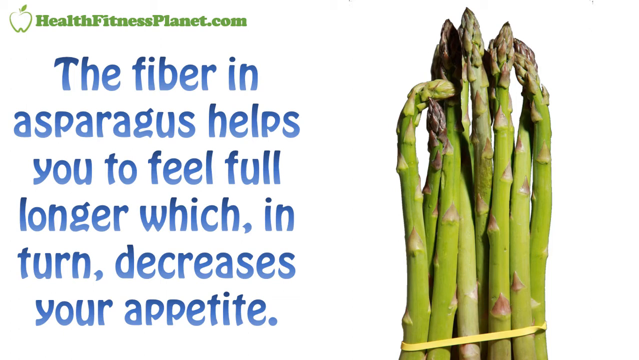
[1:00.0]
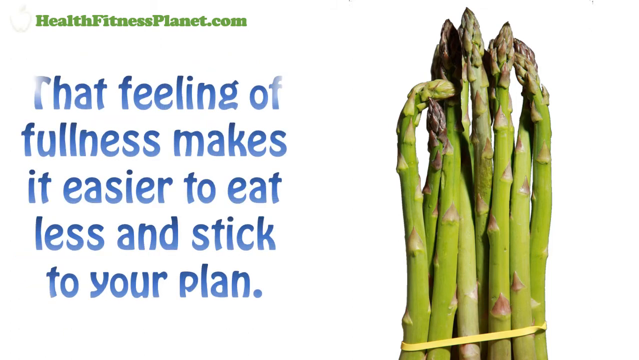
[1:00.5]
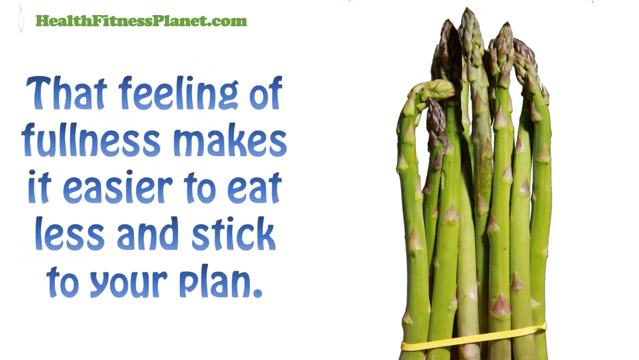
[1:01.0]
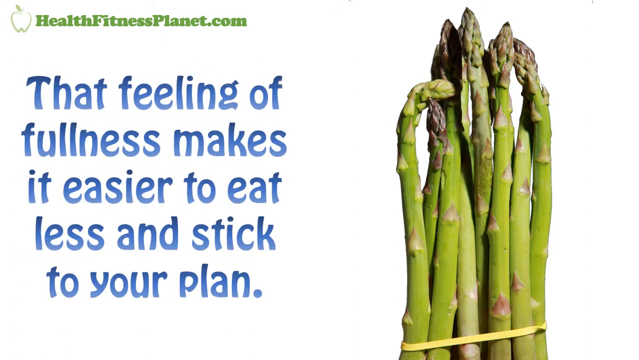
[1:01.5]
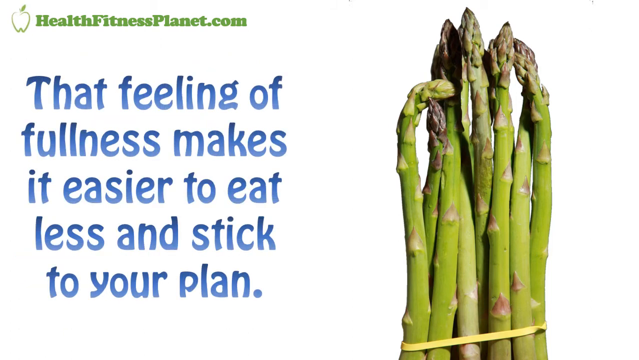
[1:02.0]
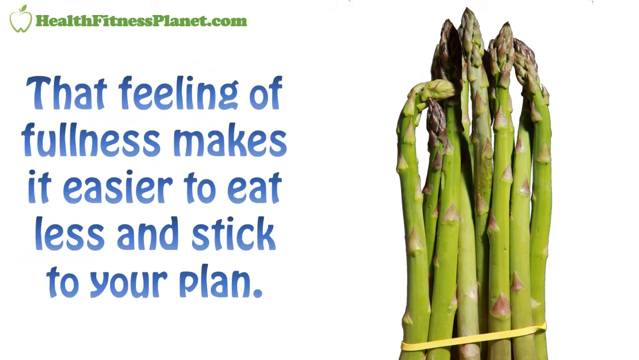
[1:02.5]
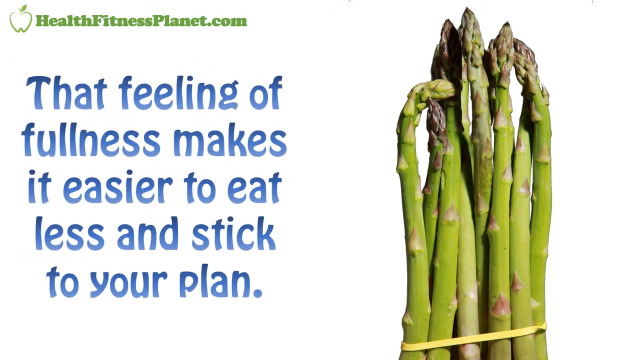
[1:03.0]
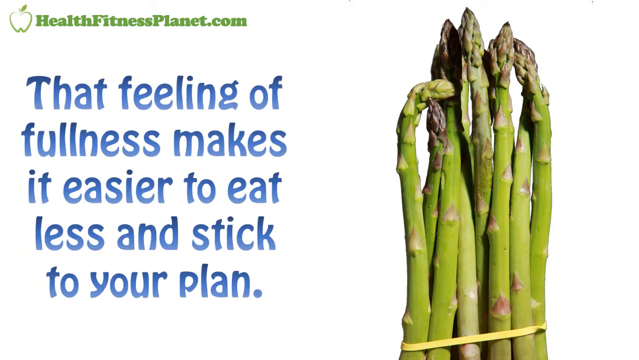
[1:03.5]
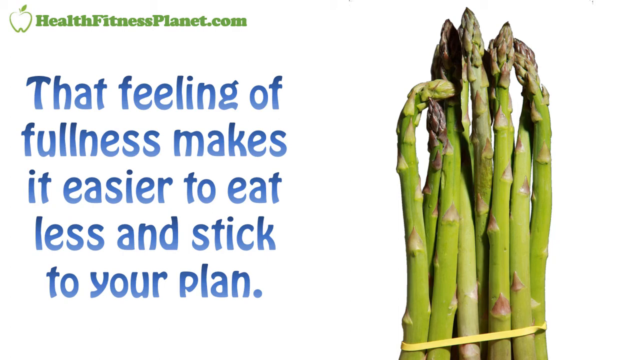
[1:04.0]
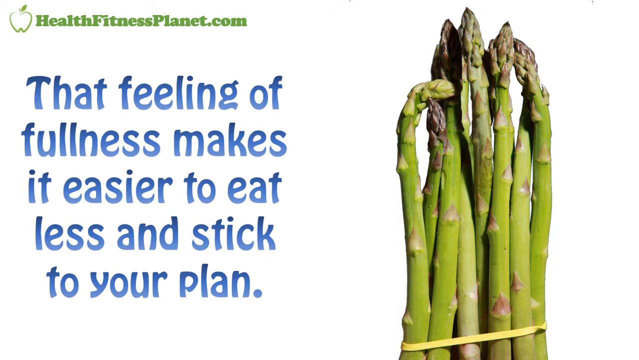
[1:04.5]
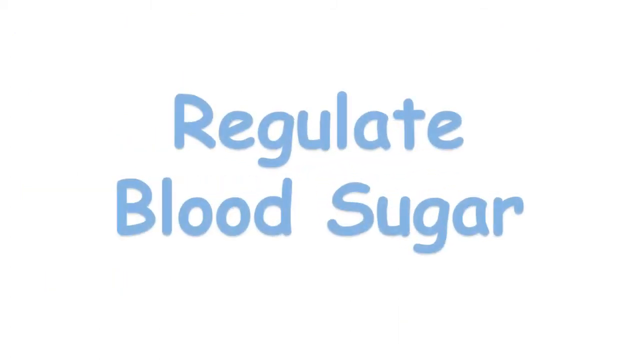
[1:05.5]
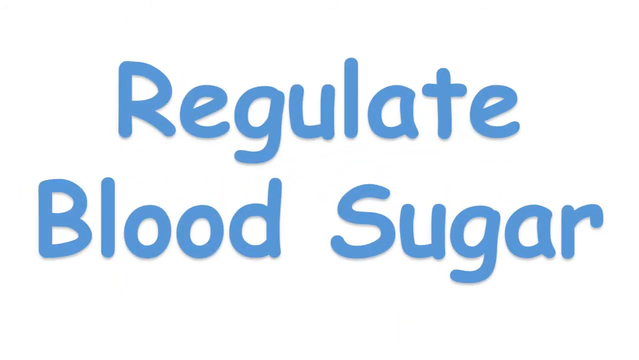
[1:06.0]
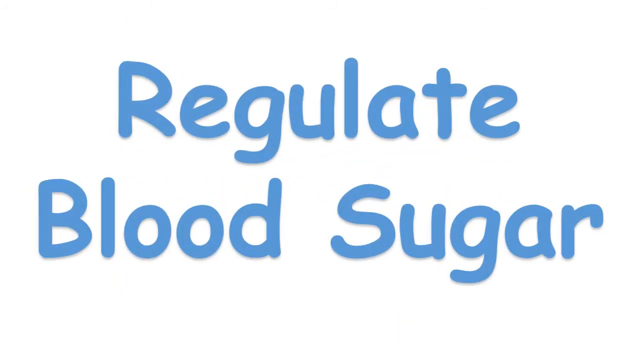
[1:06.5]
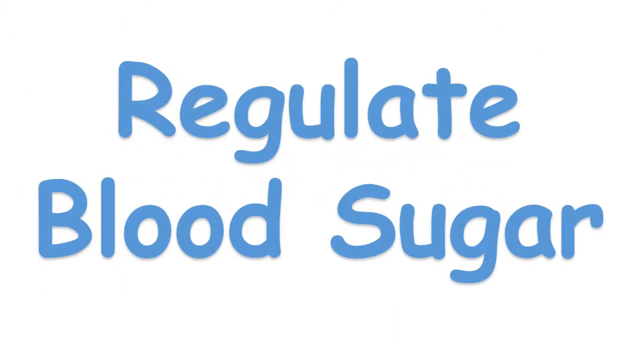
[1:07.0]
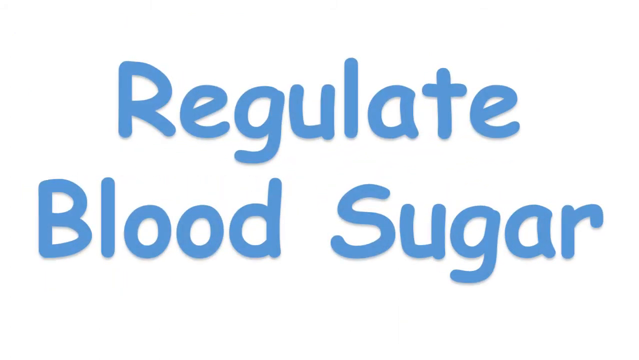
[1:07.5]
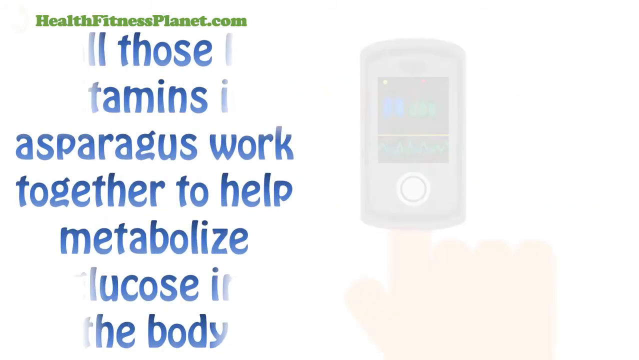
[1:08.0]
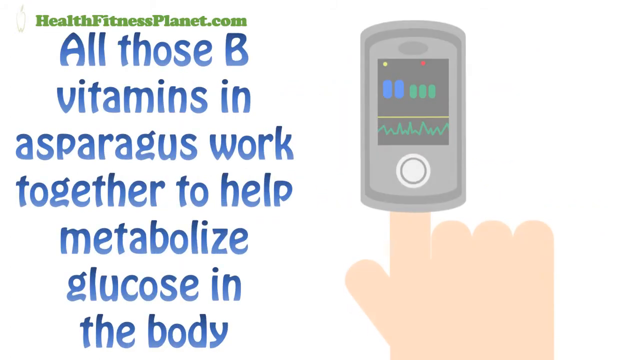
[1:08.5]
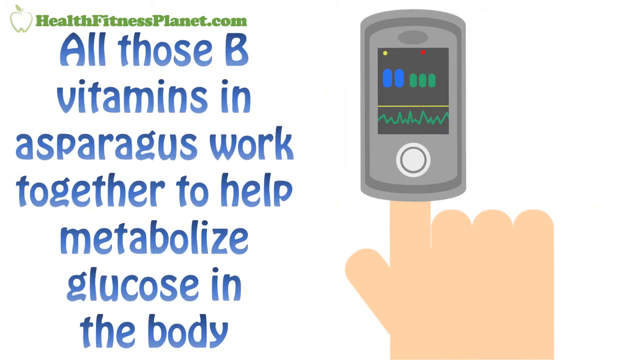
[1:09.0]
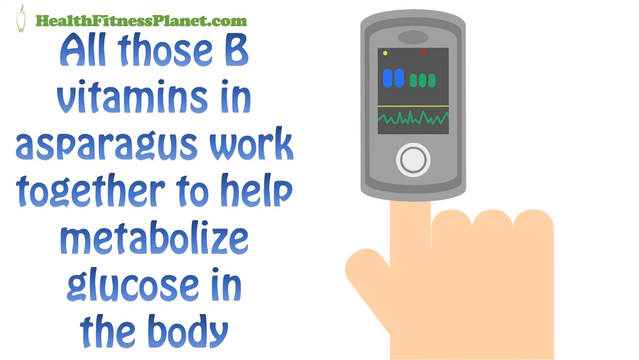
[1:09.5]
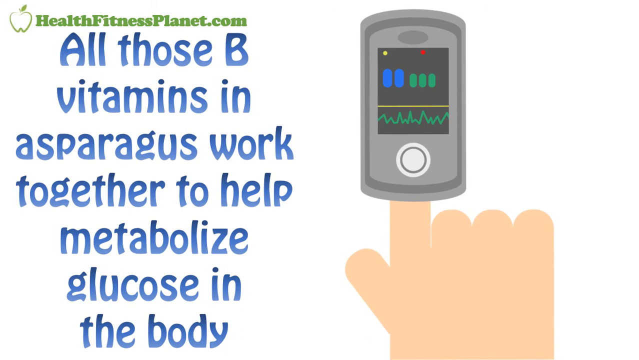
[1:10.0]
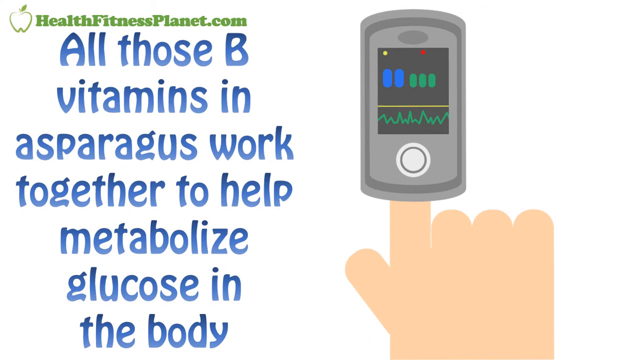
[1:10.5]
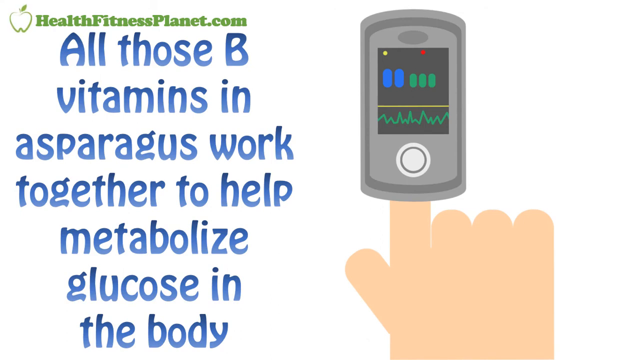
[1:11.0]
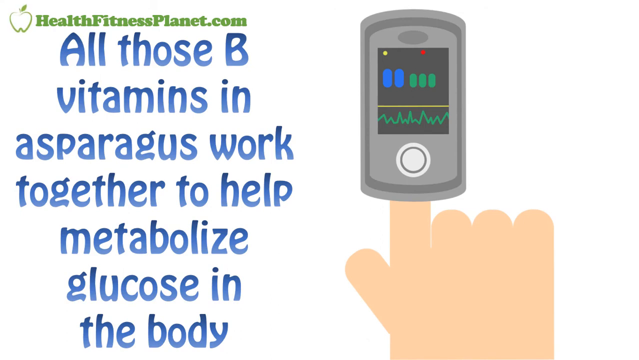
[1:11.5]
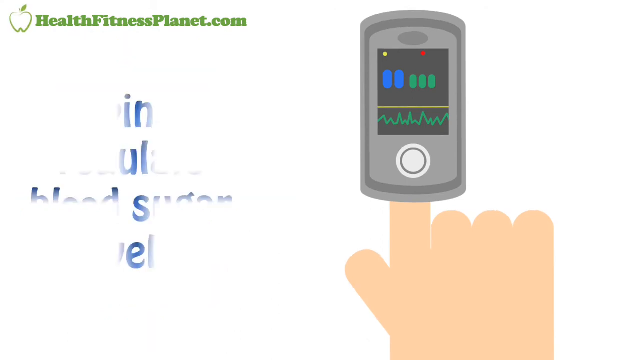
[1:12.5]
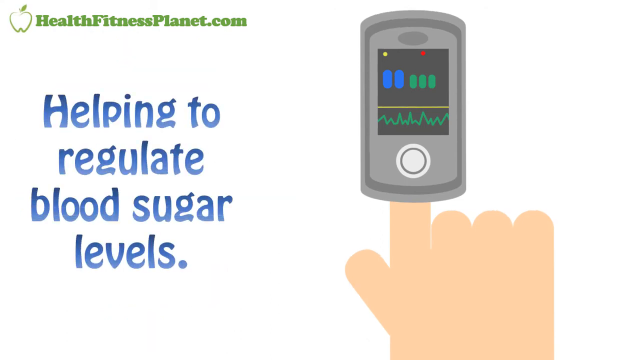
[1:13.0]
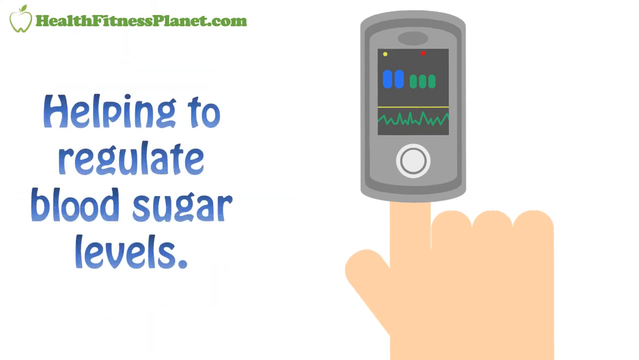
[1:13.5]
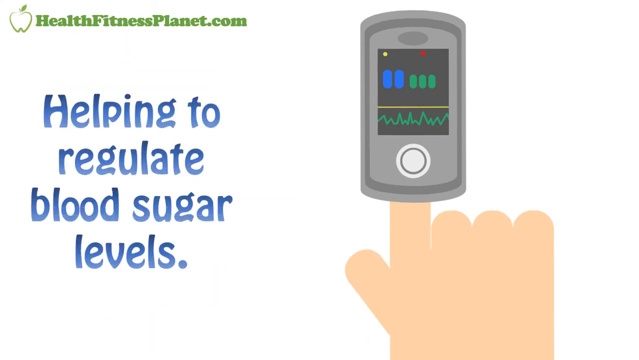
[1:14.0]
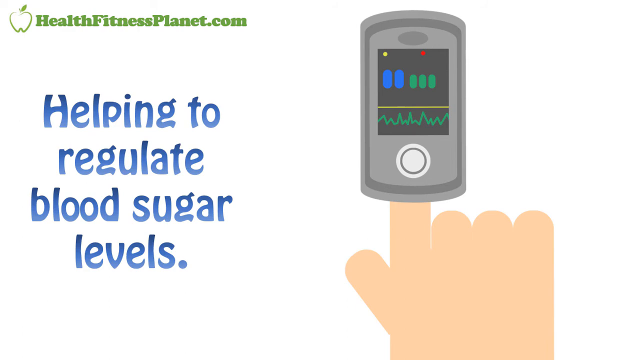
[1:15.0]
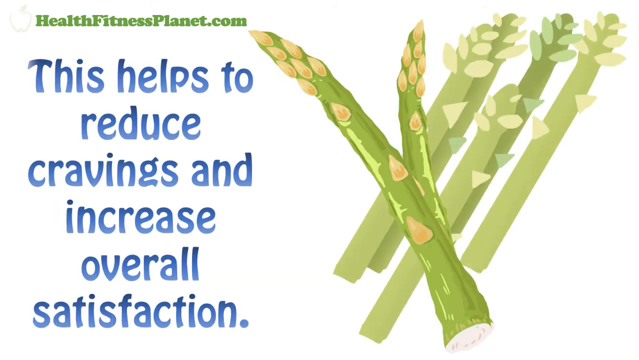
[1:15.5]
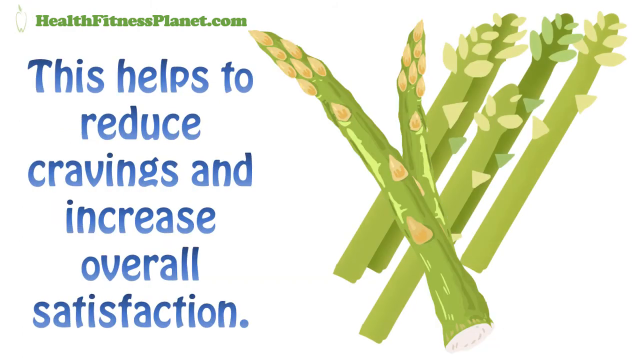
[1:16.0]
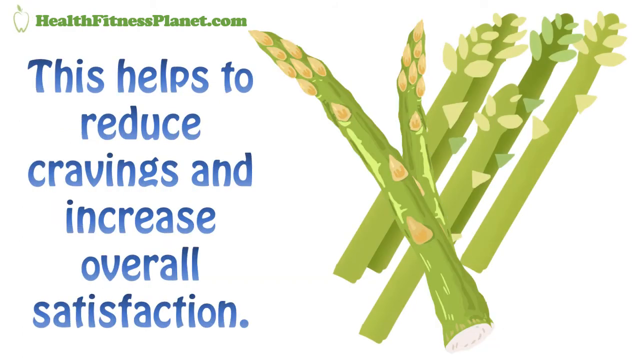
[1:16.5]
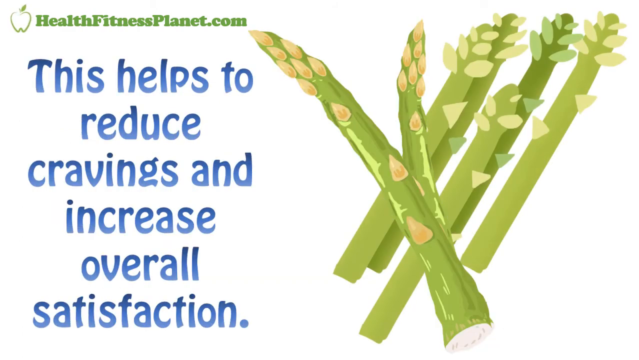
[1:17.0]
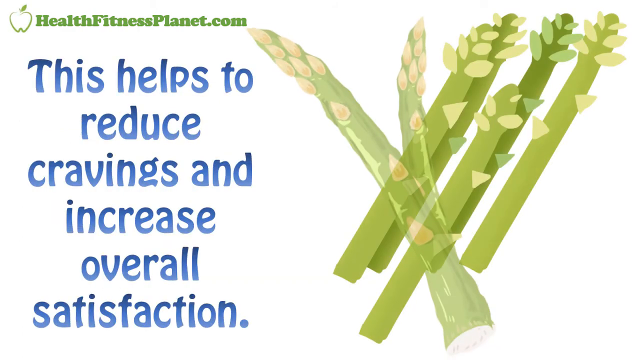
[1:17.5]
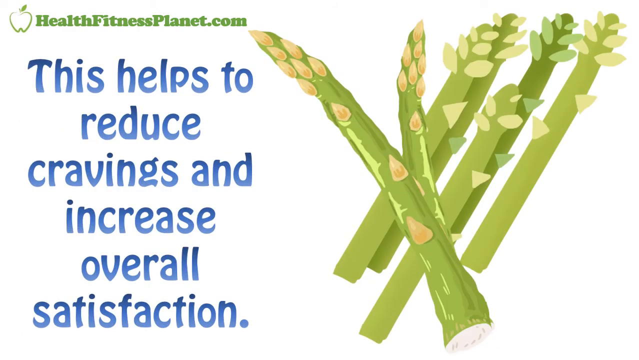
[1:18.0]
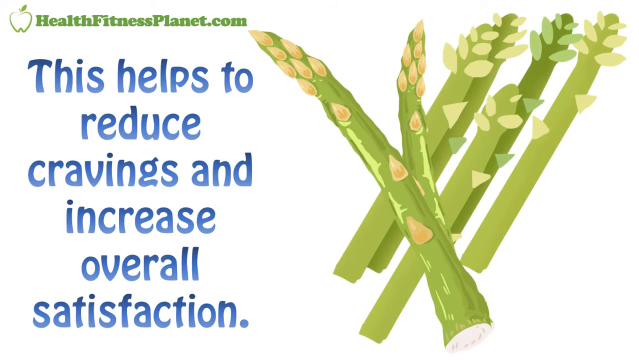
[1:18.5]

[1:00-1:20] The screen changes to the same photograph of asparagus stalks standing upright on the right. On the left, at the top, is the green "healthfitnessplanet.com" with the apple logo, and below it blue text says "that feeling of fullness makes it easier to eat less." The blue text changes, and the next screen shows the words "regulate blood sugar" in blue. A cartoon then appears on the right of a human hand with the index finger stuck into a blood glucose monitor, while blue lettering on the left says "all those B vitamins and asparagus work together to help metabolize glucose in the body." The text changes, and the next screen says "helping to regulate blood sugar levels" in blue. The whole screen then changes to a cartoon drawing of five asparagus spears in green on the right, and the blue text on the left says "this helps to reduce cravings and increase overall satisfaction."